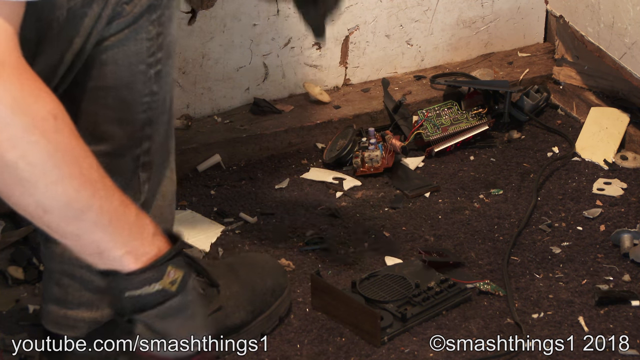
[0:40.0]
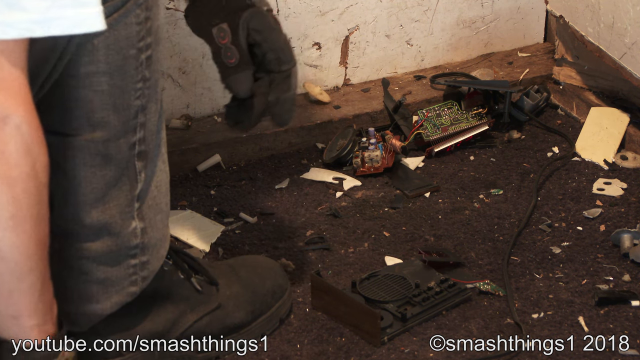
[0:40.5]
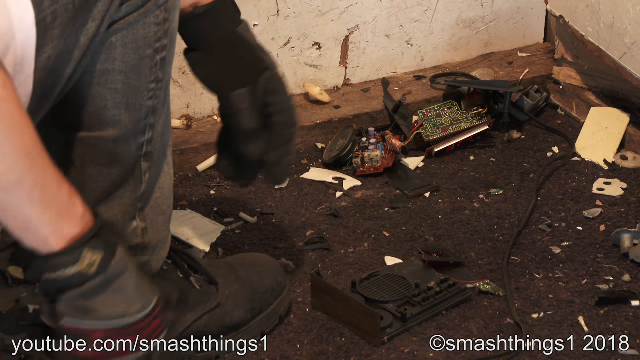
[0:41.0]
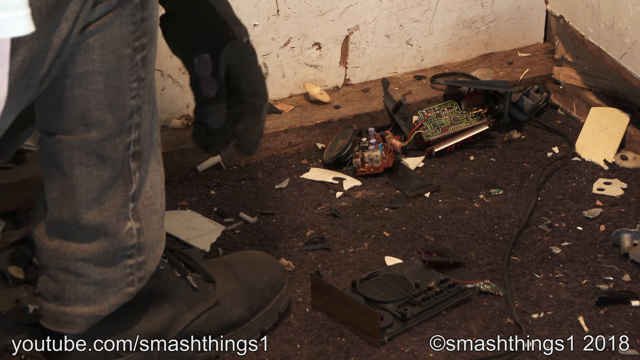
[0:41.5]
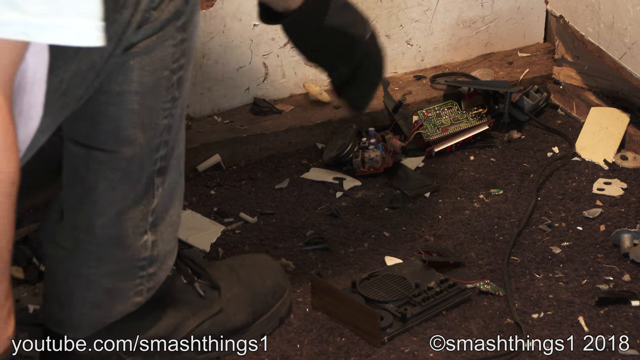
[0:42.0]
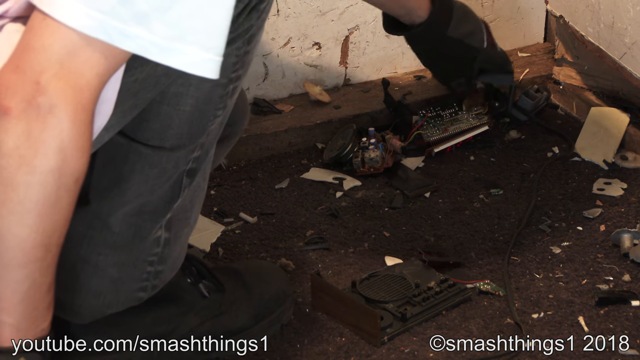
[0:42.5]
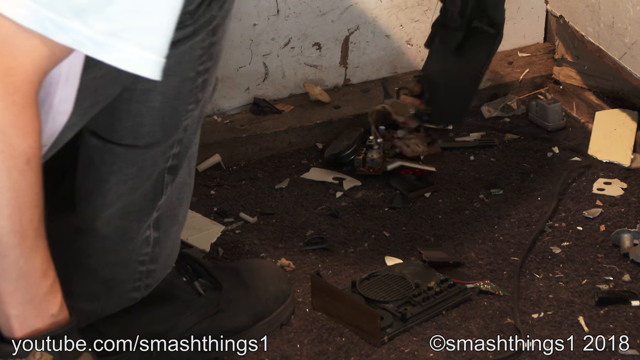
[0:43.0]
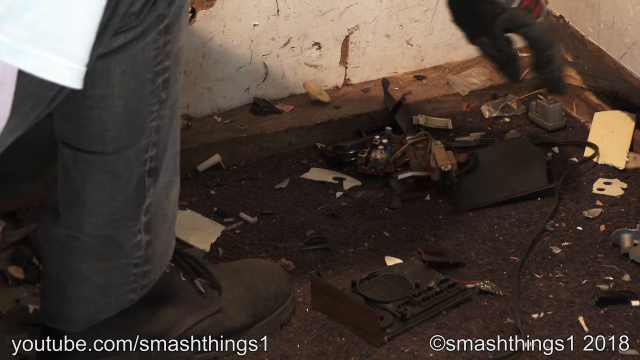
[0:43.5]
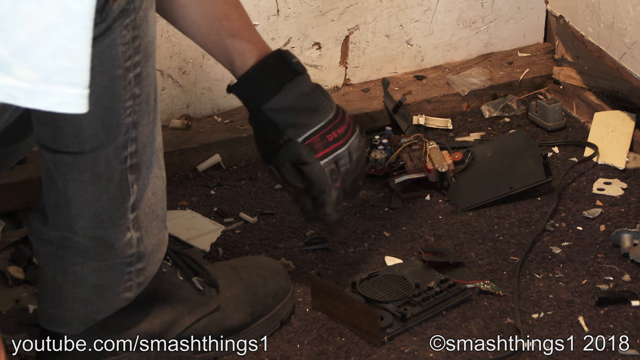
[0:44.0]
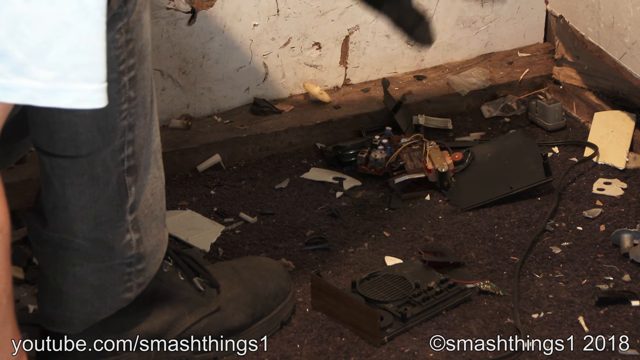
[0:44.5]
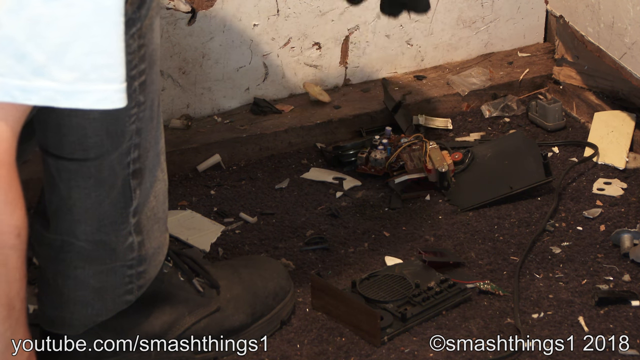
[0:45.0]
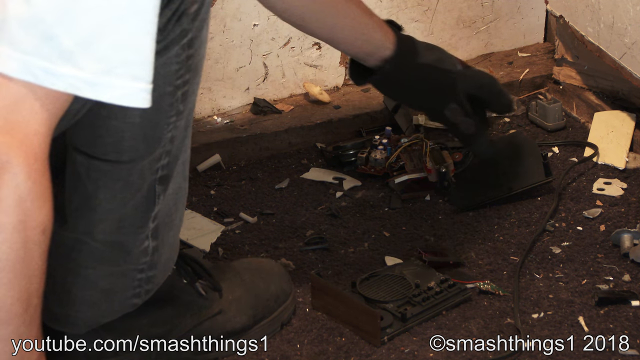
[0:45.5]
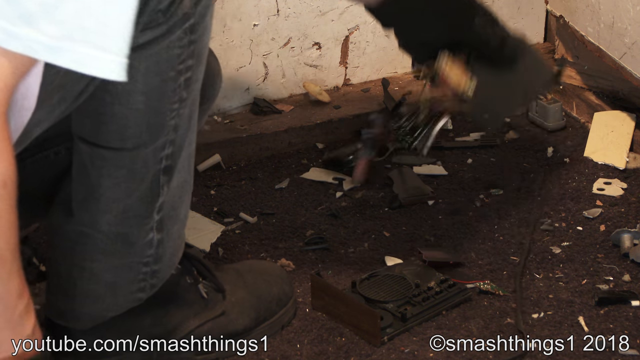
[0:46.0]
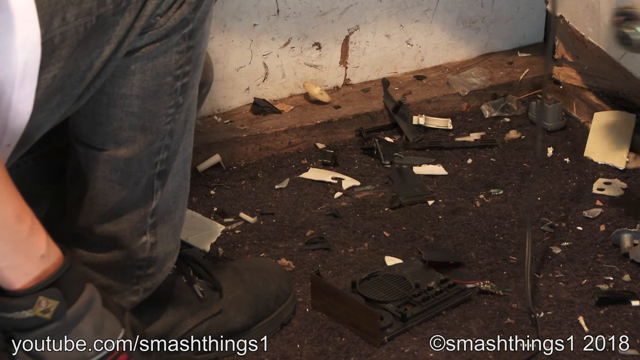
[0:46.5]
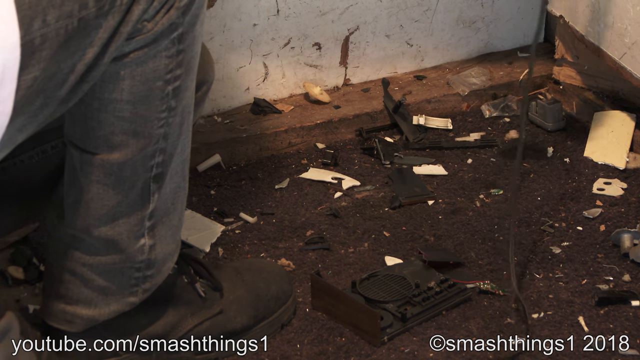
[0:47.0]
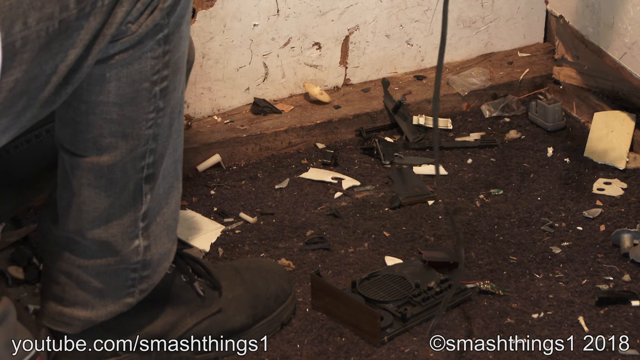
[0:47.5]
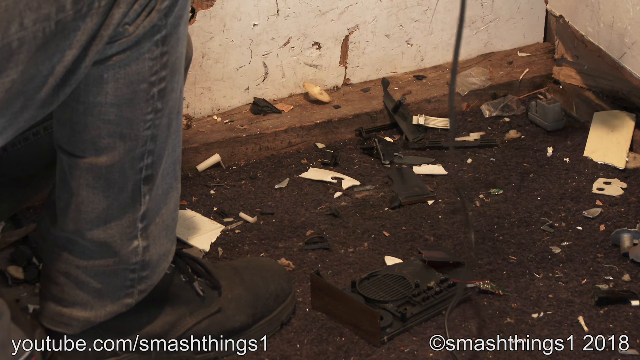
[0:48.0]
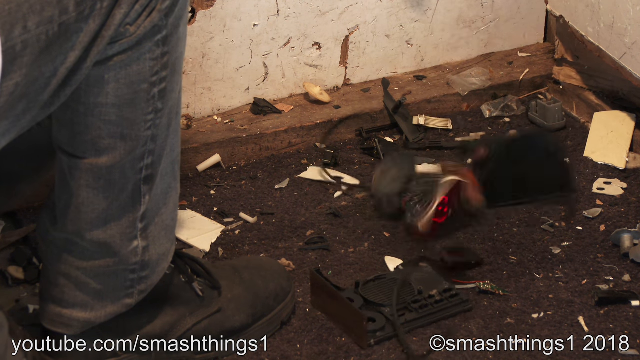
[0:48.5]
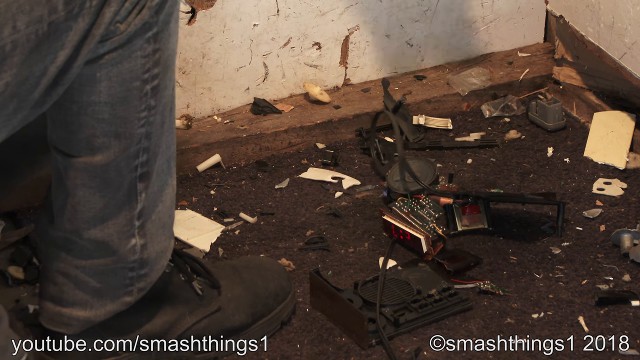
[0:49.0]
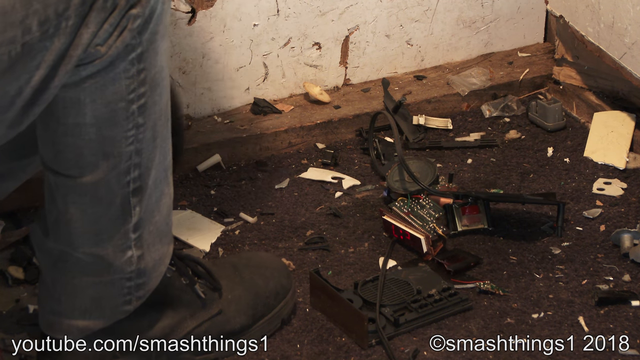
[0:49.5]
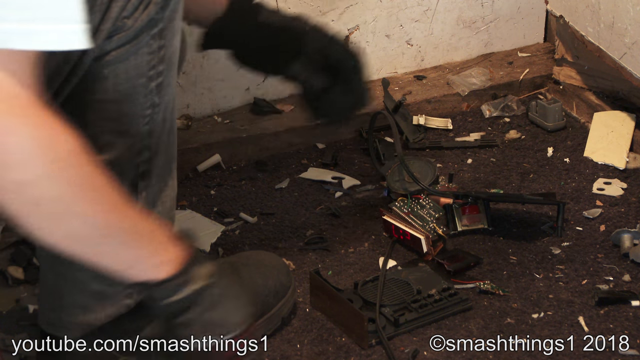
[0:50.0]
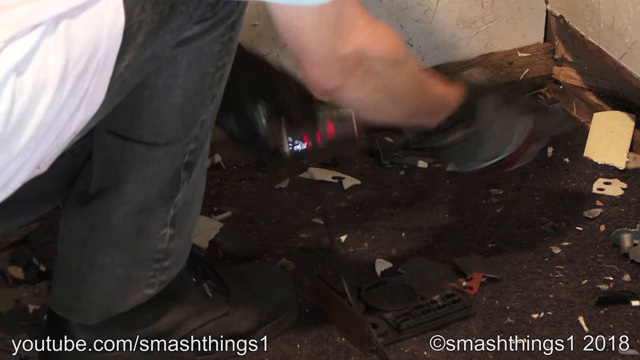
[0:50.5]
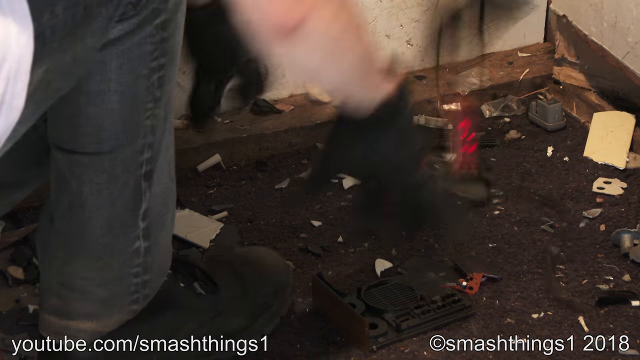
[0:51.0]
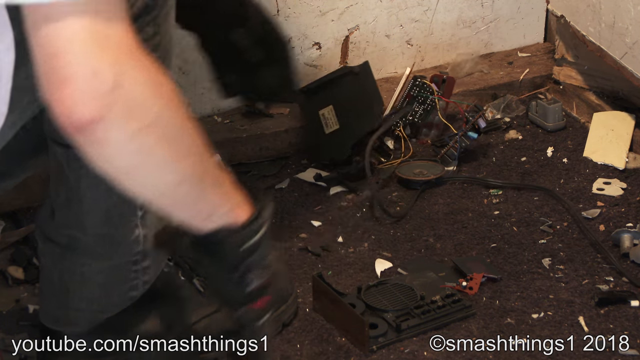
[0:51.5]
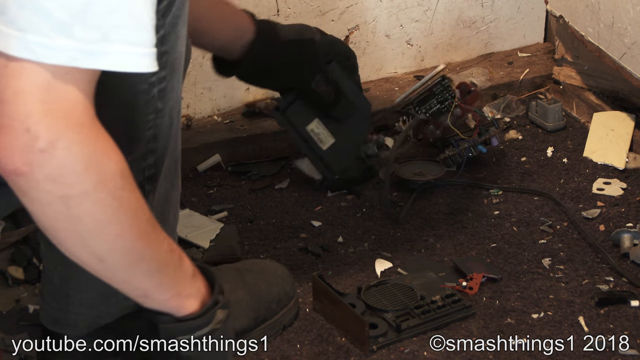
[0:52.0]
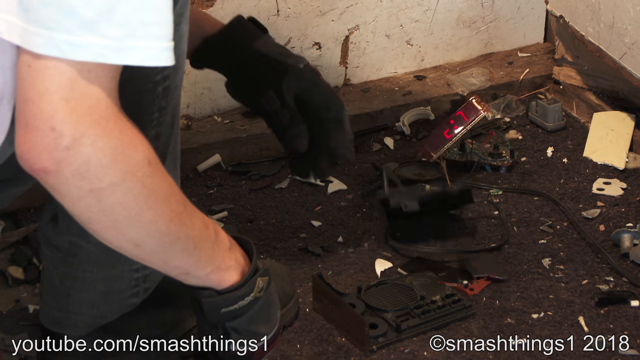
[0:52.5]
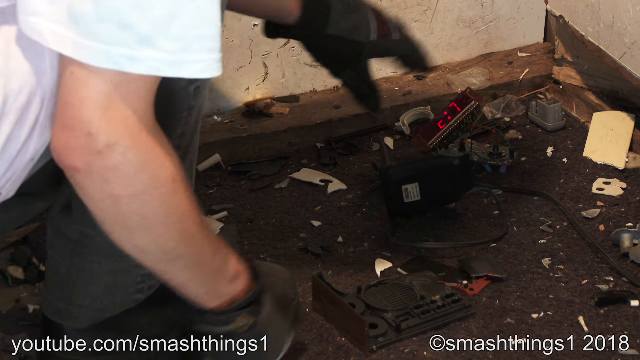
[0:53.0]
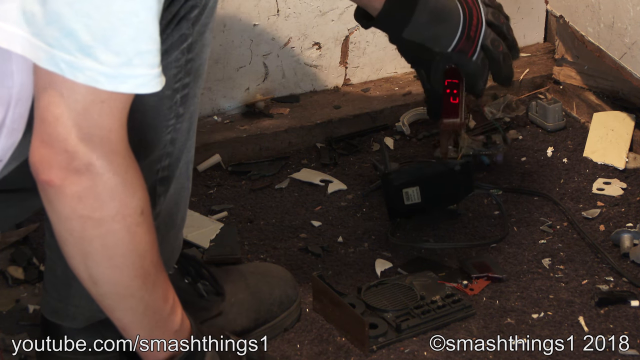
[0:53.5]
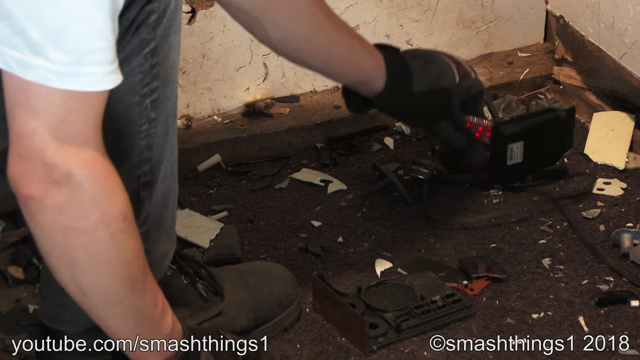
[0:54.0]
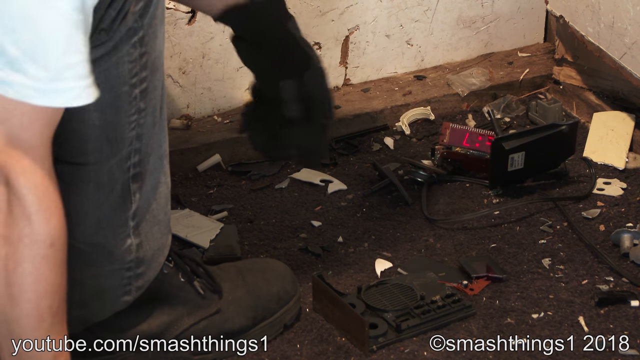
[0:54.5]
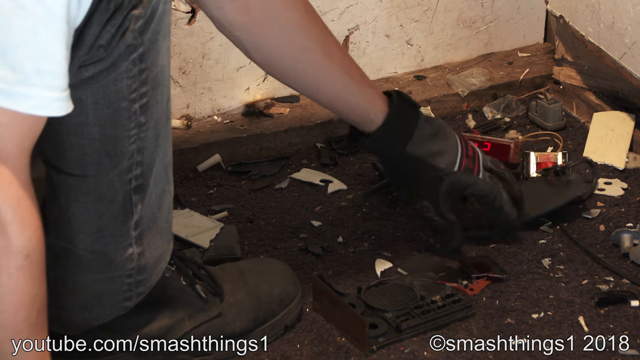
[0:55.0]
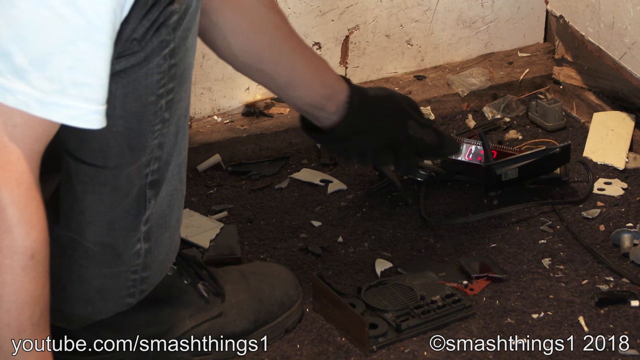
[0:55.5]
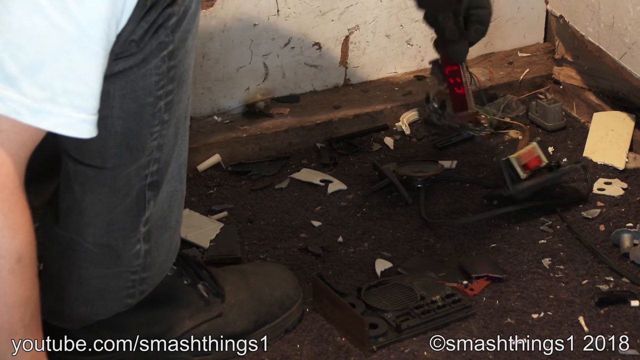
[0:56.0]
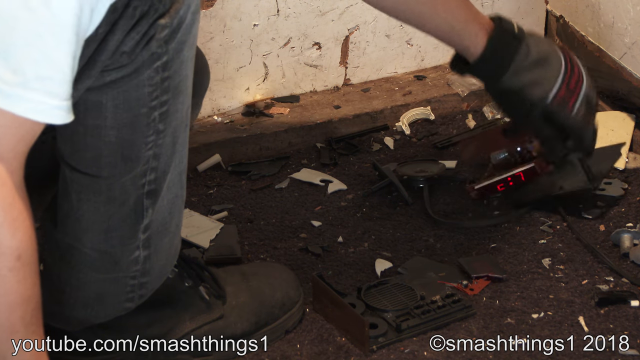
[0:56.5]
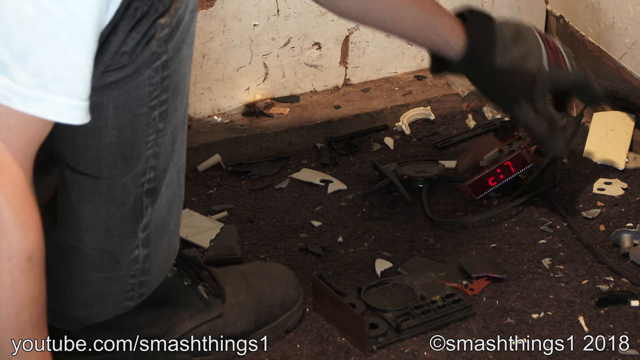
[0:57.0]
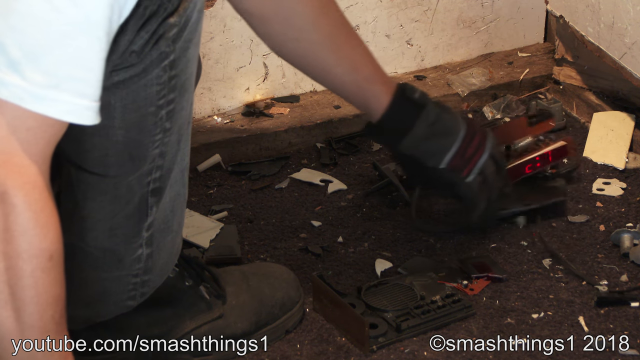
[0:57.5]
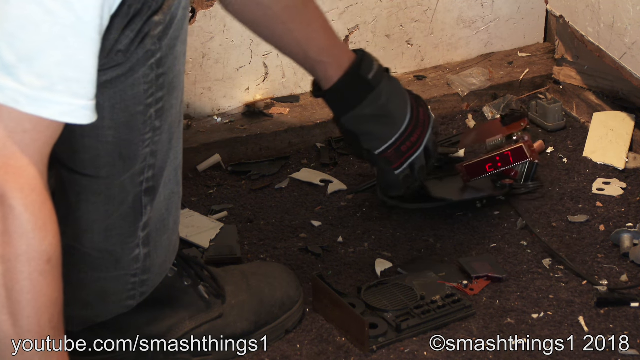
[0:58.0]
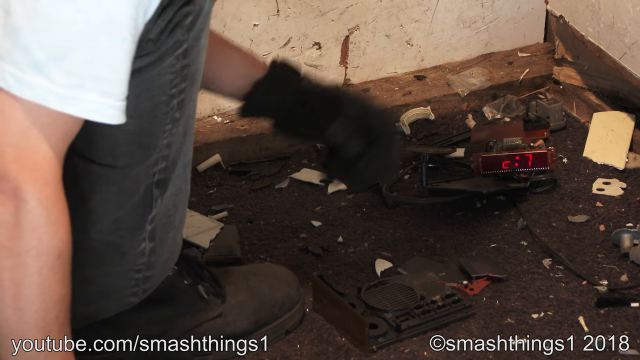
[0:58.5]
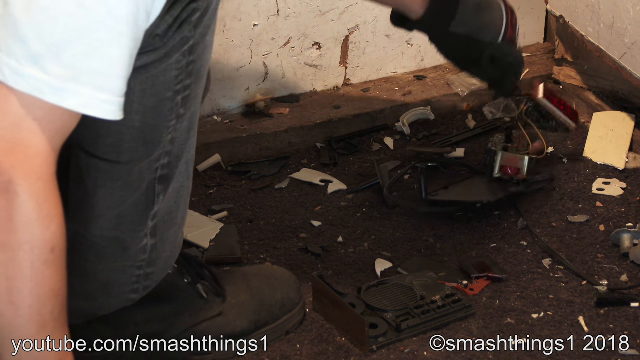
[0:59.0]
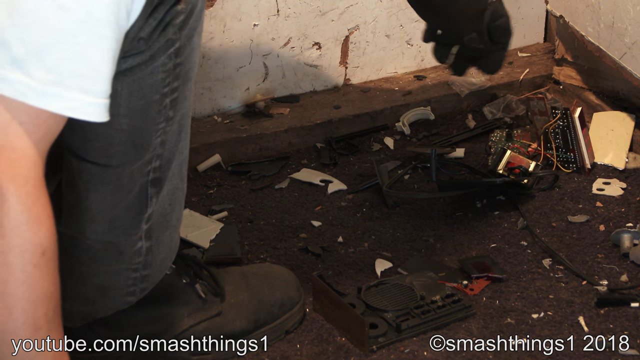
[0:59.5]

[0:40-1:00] In an interior room with banged-up walls and dark wood beams across the floor, a man is visible only from the knees down. He is hunched over amid a large pile of debris, his body on the left and his hands extending to the right toward the corner. Having thrown a clock on the ground, he lifts up some of the debris of previously broken items, including electrical cords, and tosses it down again, as if to see whether he can break it further, while the clock is still lit with red numbers on its digital reading. The room does not appear to be well lit. The man is fair-skinned, but he is seen only from the wrist up to the biceps, and the size of the room cannot be seen.